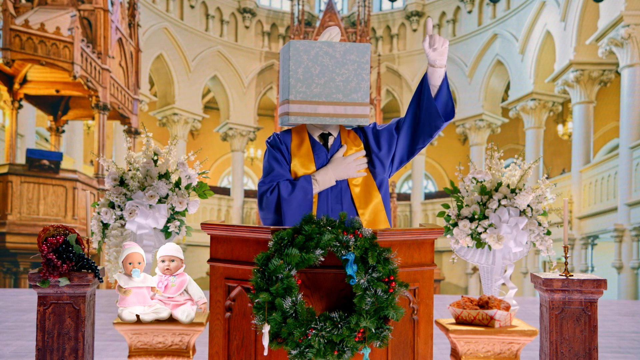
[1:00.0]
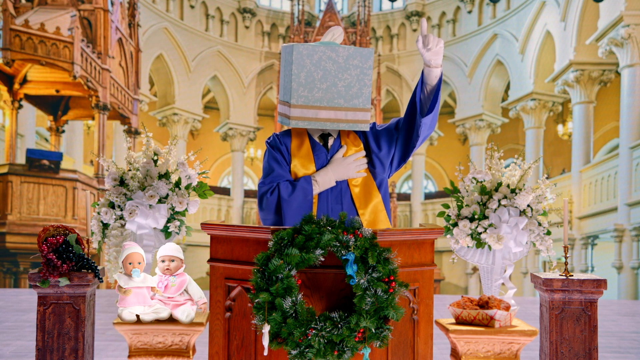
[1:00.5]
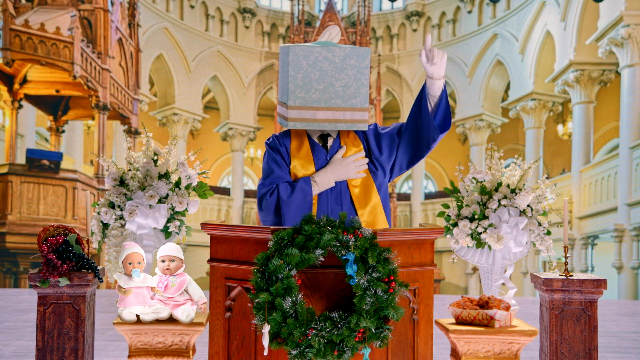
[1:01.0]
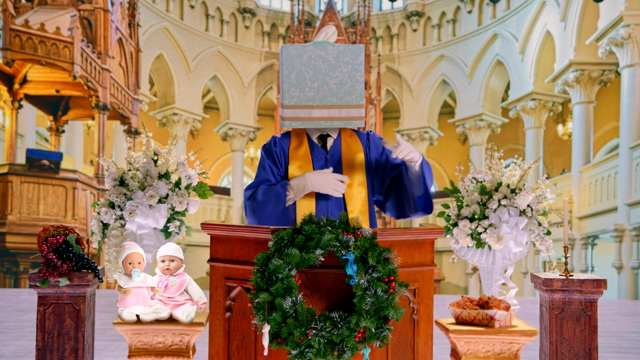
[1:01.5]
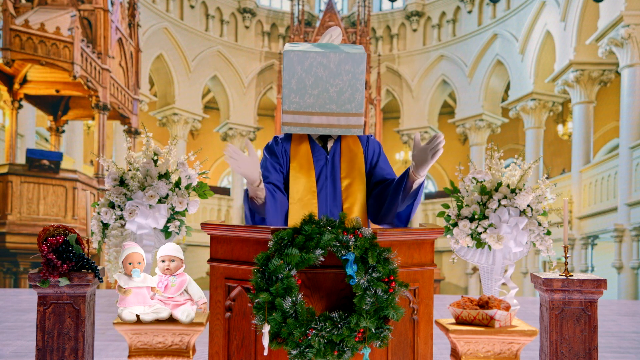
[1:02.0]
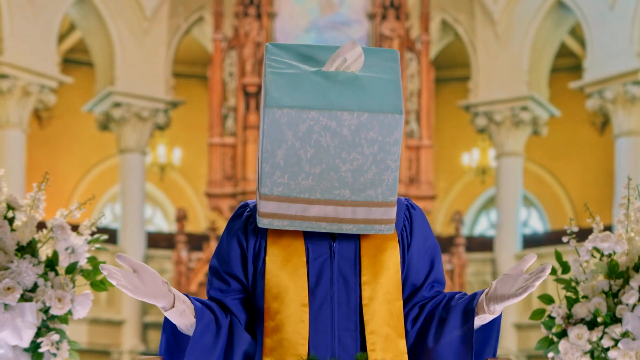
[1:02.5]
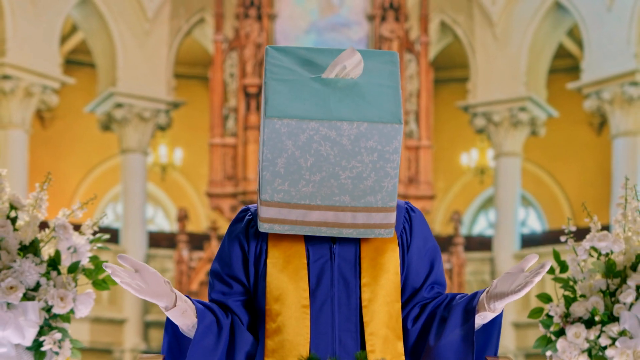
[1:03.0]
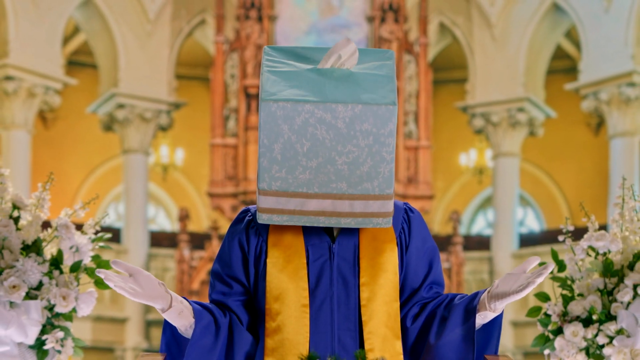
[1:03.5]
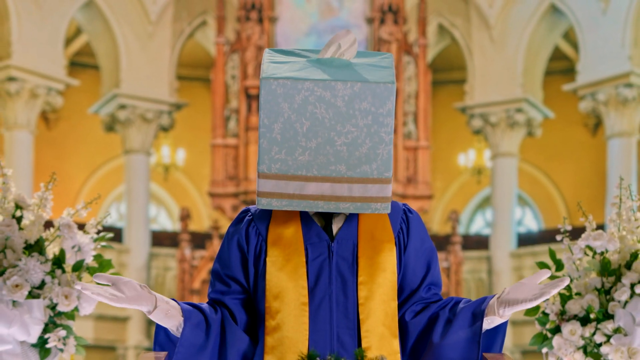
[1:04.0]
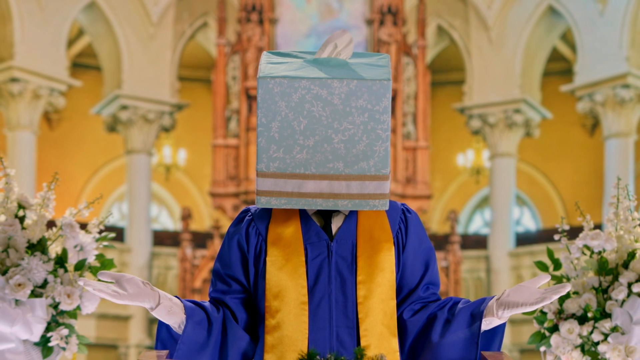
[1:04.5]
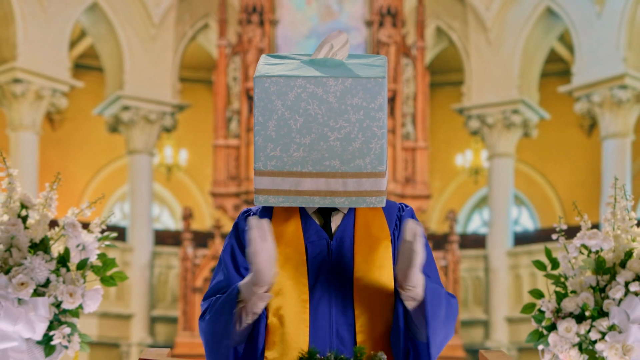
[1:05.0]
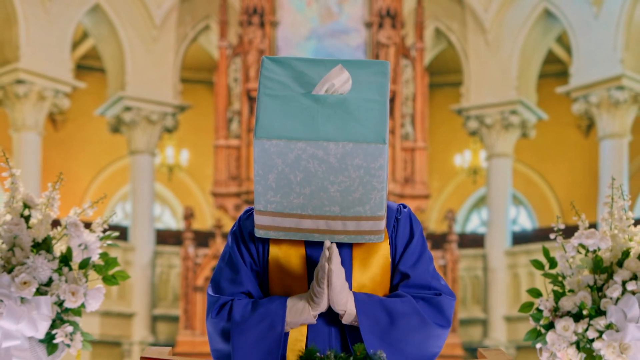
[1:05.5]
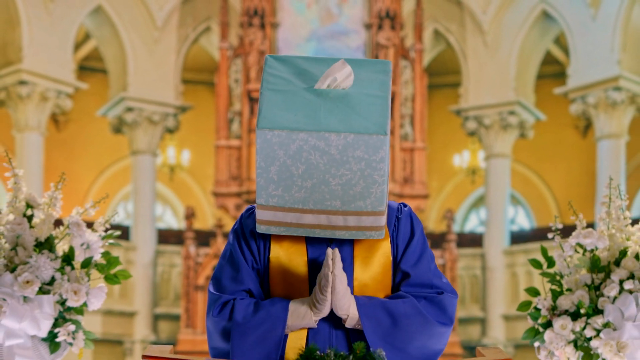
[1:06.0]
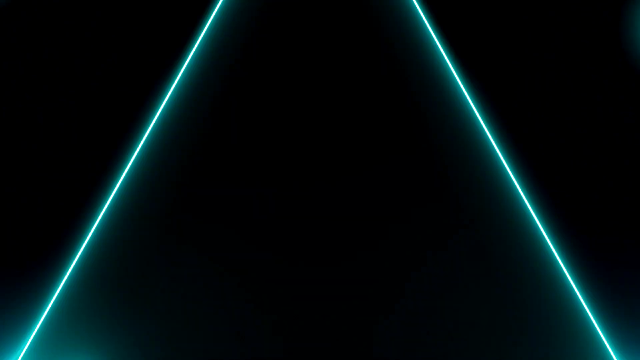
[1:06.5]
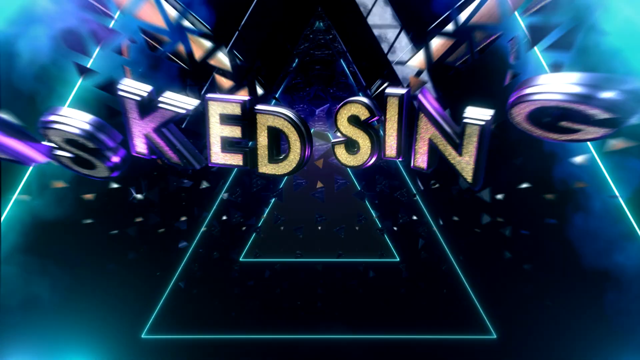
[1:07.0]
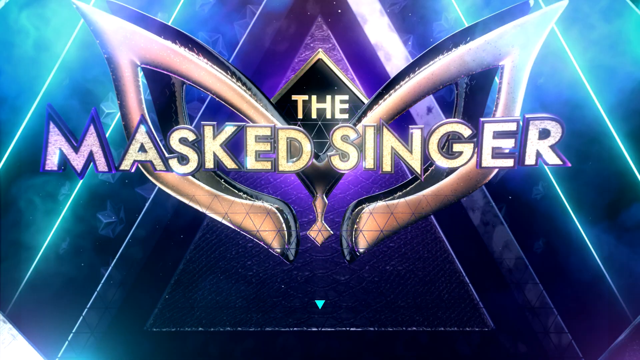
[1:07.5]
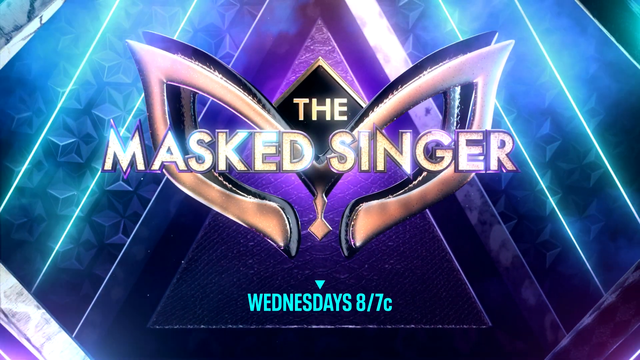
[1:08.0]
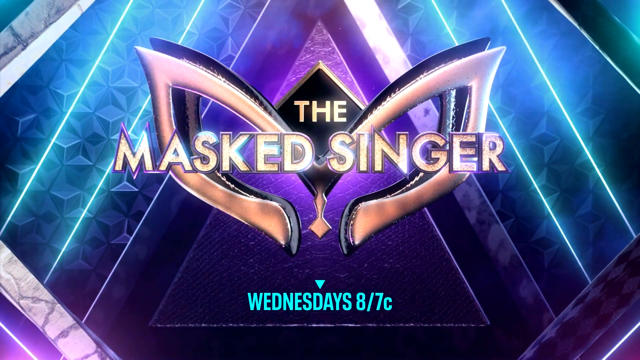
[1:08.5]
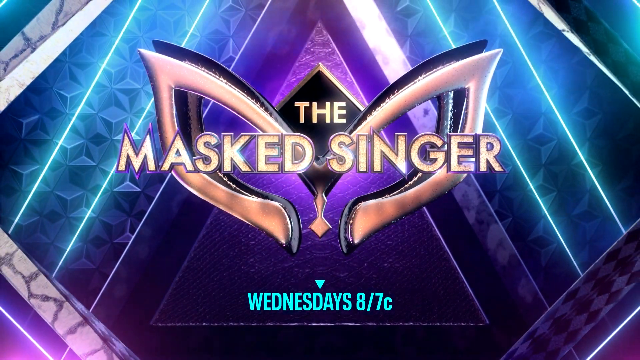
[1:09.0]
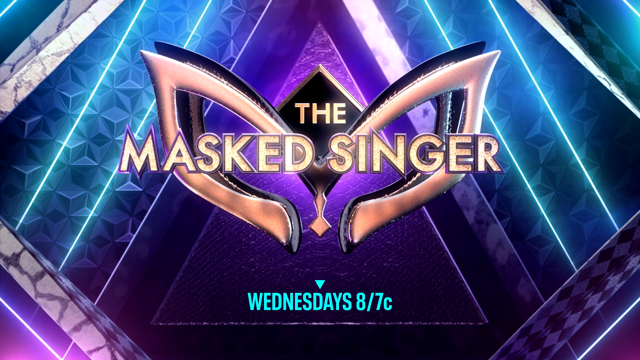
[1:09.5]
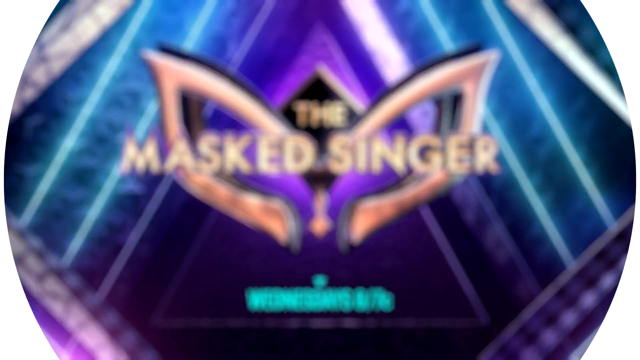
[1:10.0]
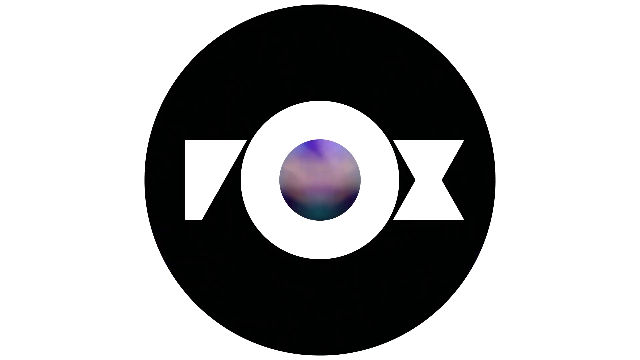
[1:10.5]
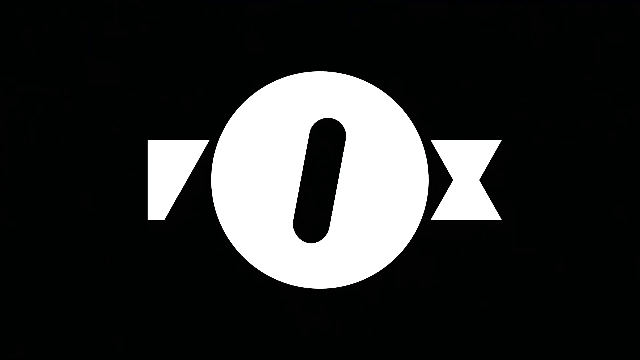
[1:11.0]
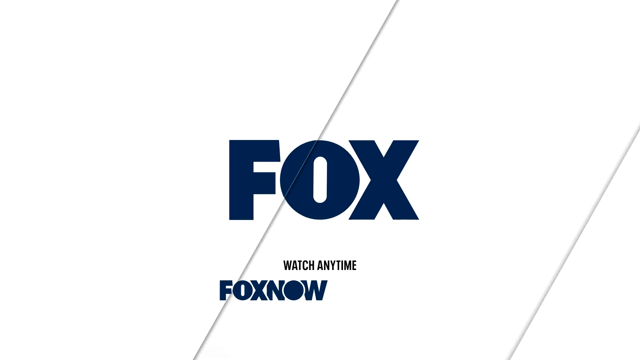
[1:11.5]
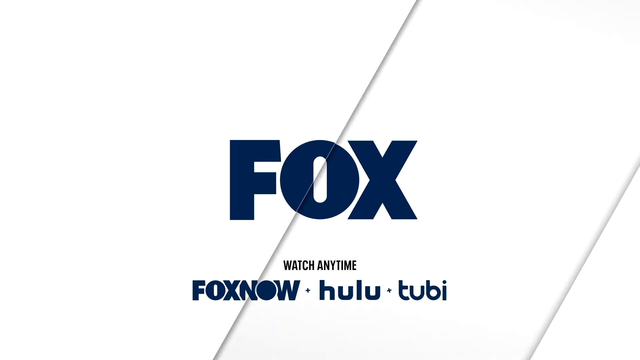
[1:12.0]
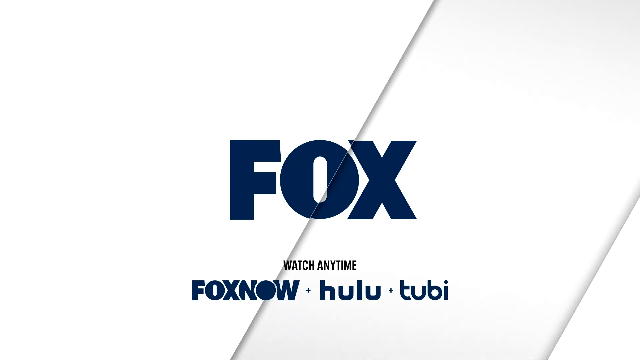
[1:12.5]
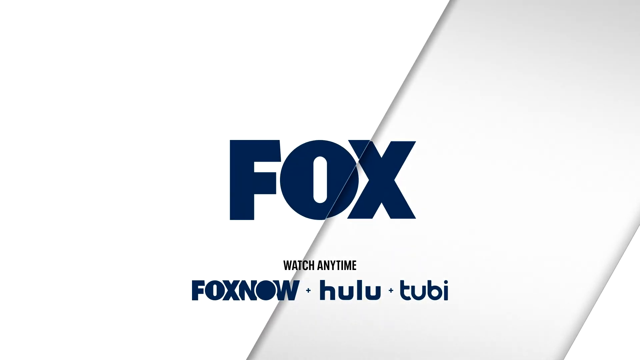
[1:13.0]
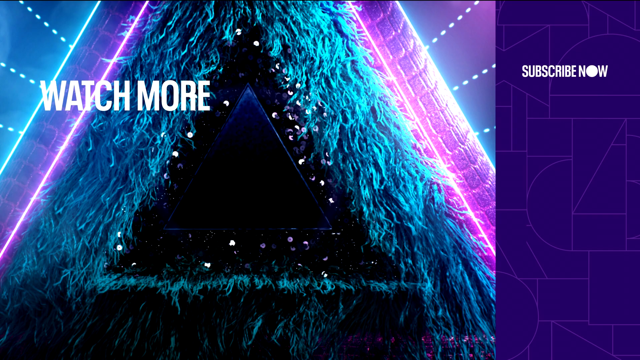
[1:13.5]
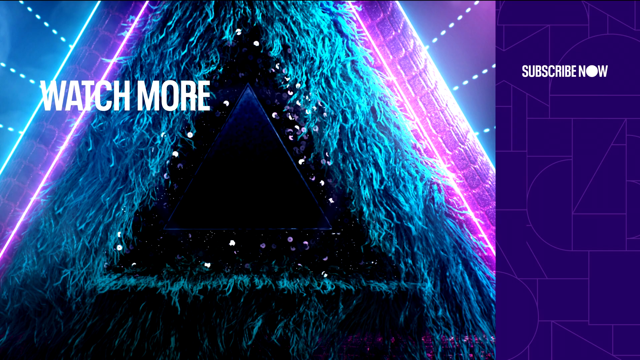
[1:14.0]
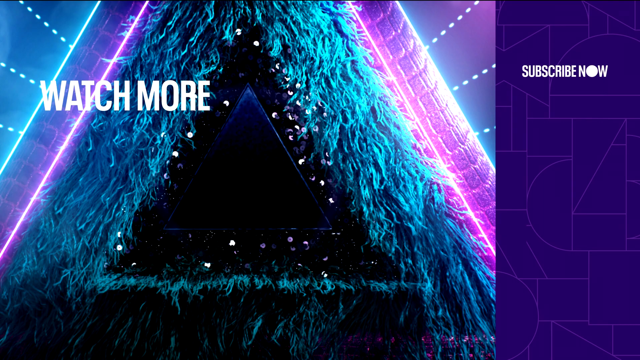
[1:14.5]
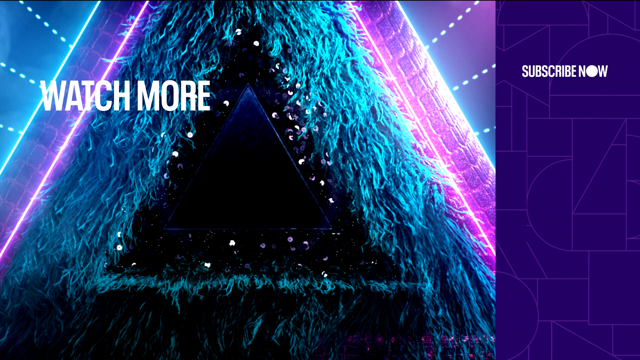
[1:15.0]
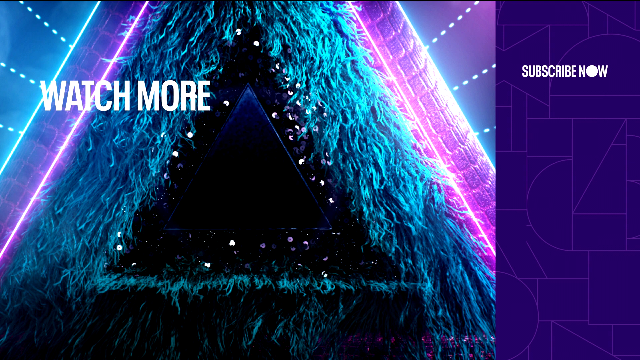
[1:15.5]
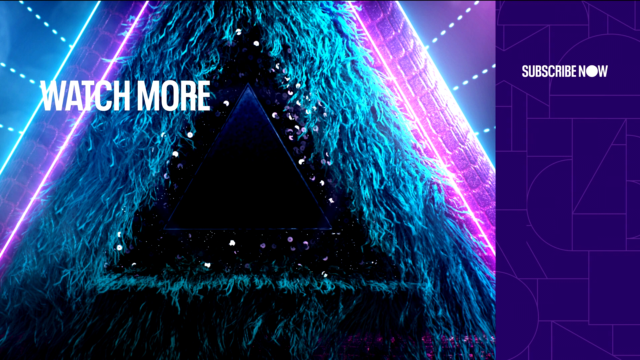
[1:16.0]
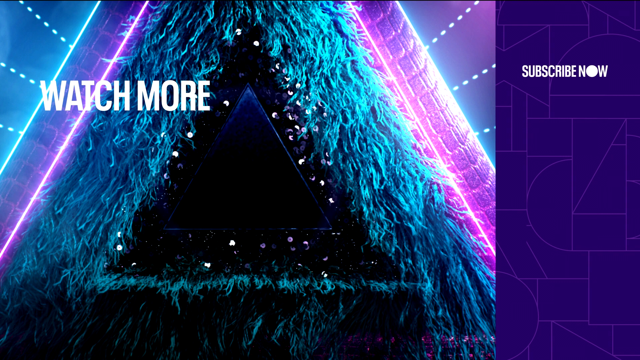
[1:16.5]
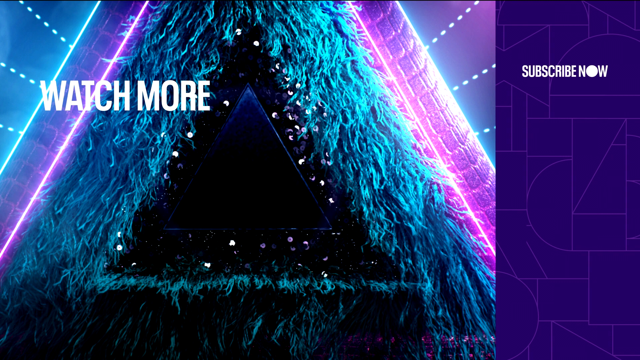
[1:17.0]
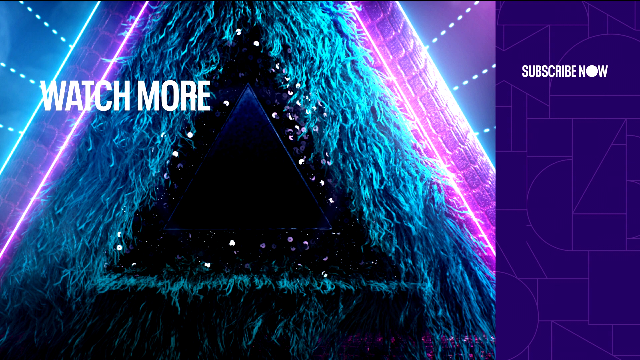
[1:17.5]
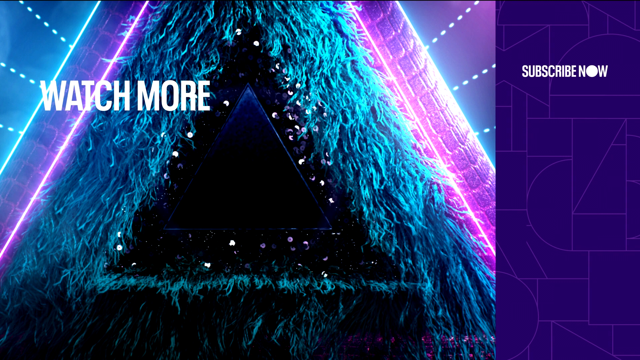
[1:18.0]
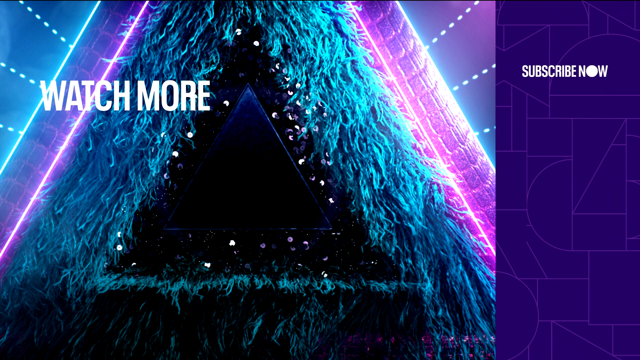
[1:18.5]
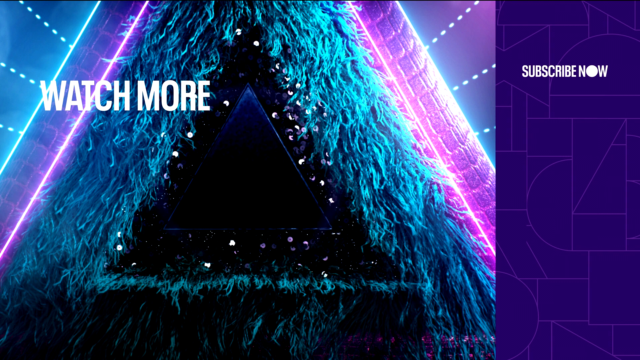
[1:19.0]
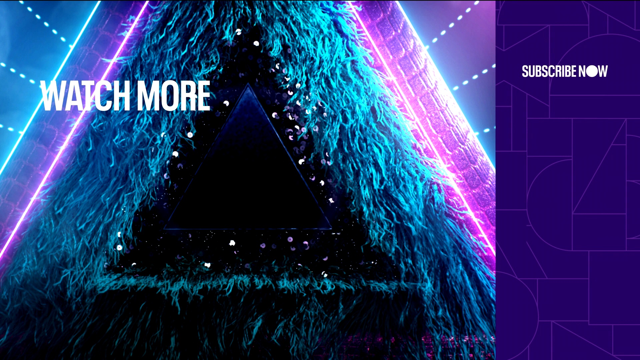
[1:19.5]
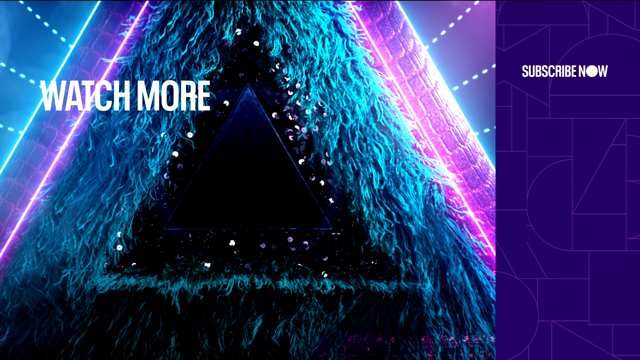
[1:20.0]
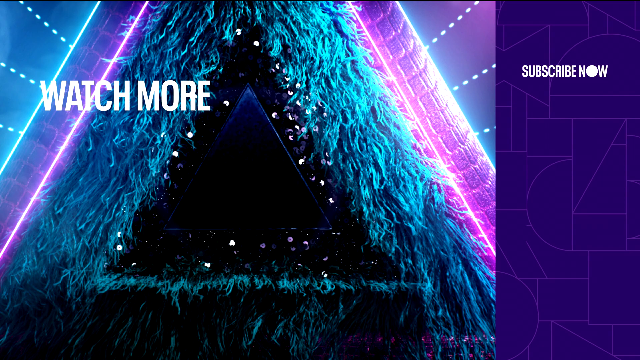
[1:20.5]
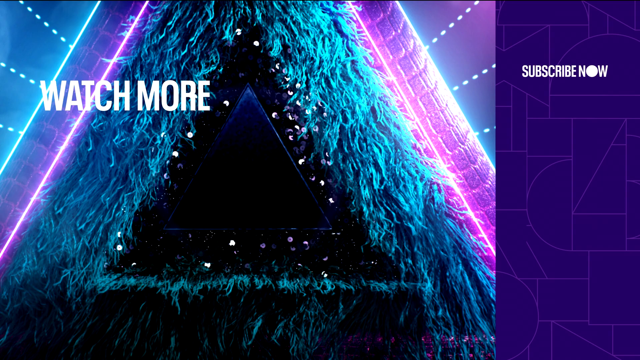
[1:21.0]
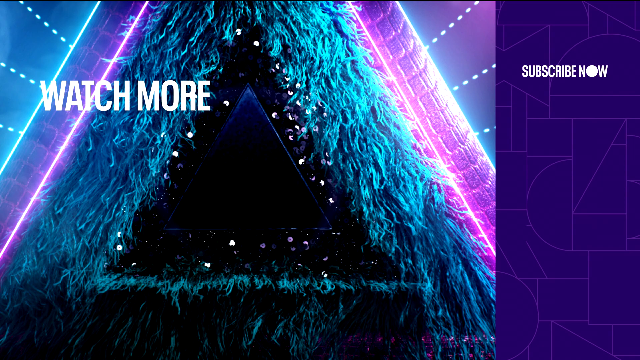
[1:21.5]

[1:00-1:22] A man with a tissue box on his head wears a blue gown or garment that looks like one for priests or pastors, a yellow ribbon around his neck and white gloves. It looks like they are in a church or cathedral, with white flowers behind him and some sort of Christmas decoration on the pulpit he is standing on. Two baby dolls are at his right-hand side. He raises his finger and says something, appearing to preach. The show is called The Masked Singer, and mask decorations are shown with the title written in gold against purple colours, with a drawing in green below. It is on Fox, and text says "watch any time" along with Fox Now, Hulu and Tune.